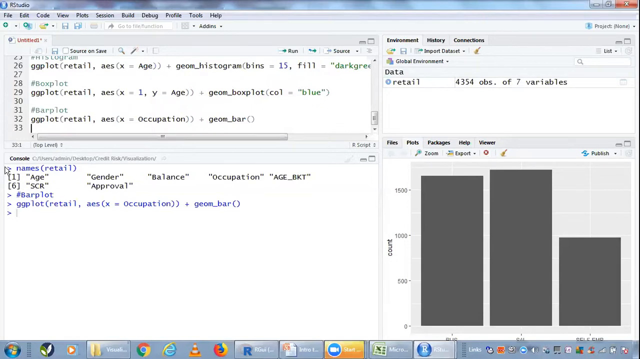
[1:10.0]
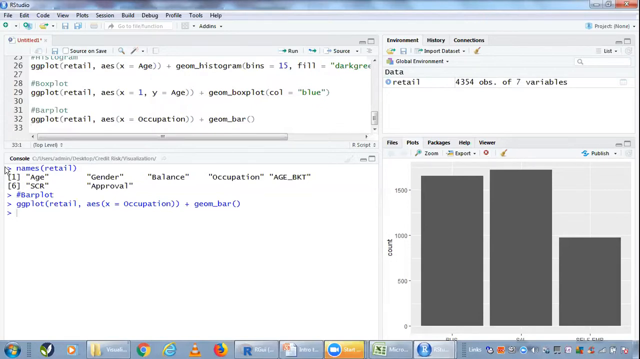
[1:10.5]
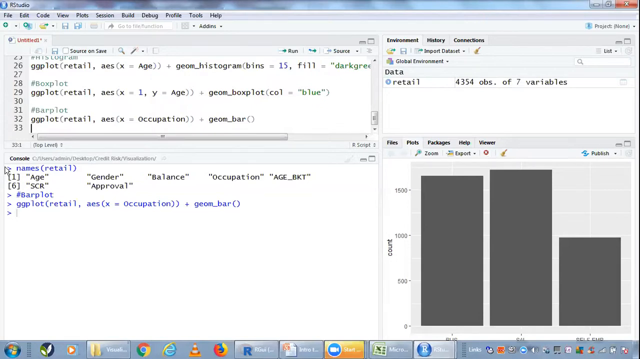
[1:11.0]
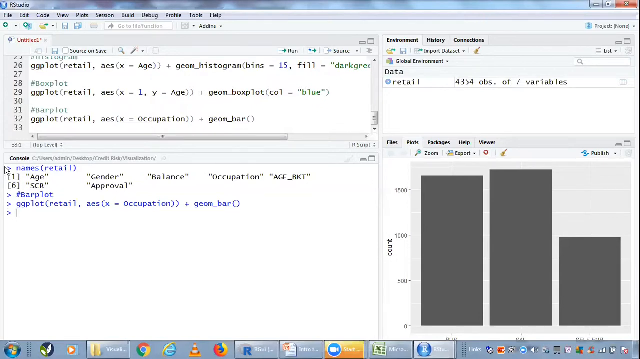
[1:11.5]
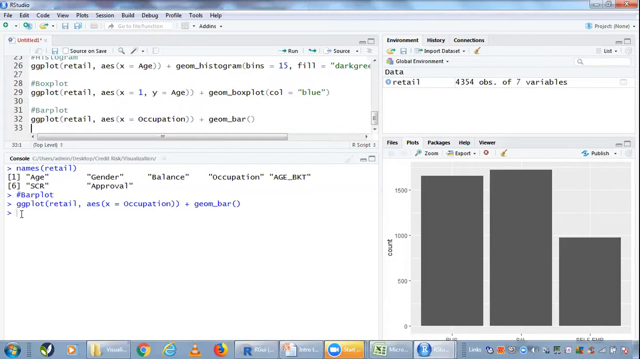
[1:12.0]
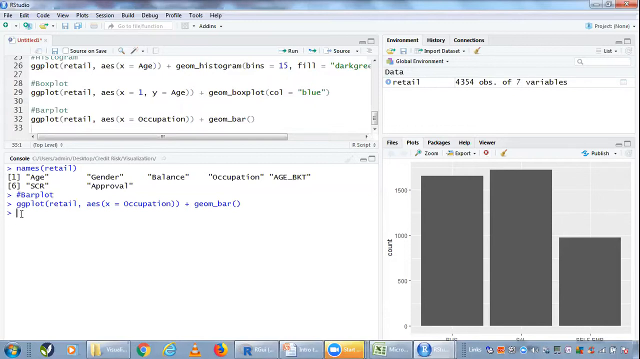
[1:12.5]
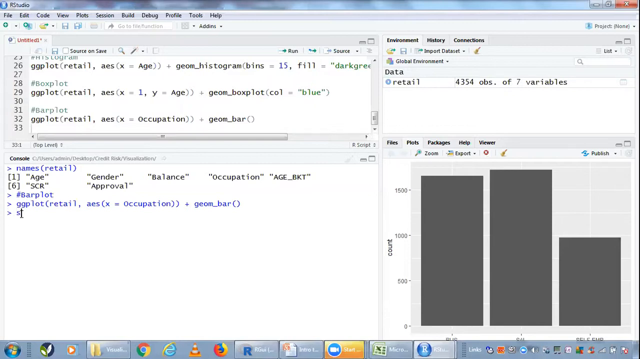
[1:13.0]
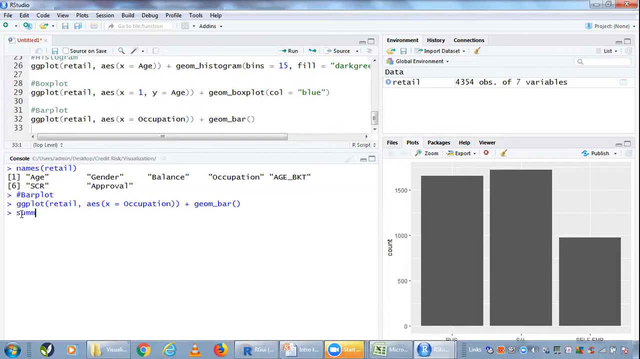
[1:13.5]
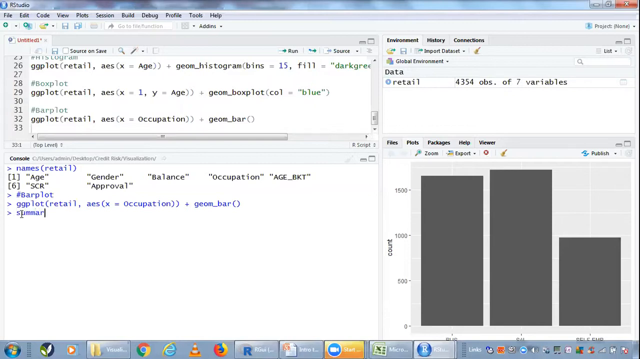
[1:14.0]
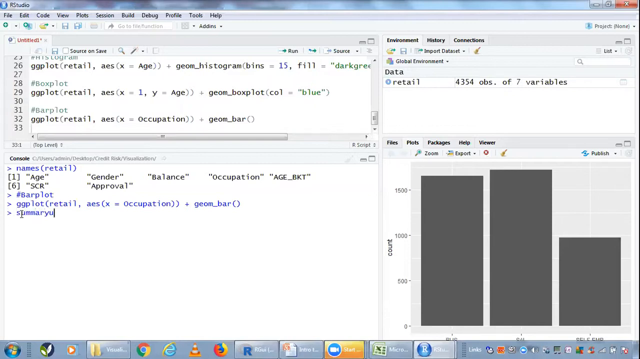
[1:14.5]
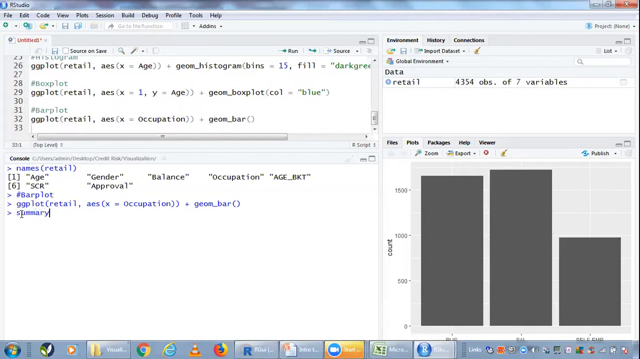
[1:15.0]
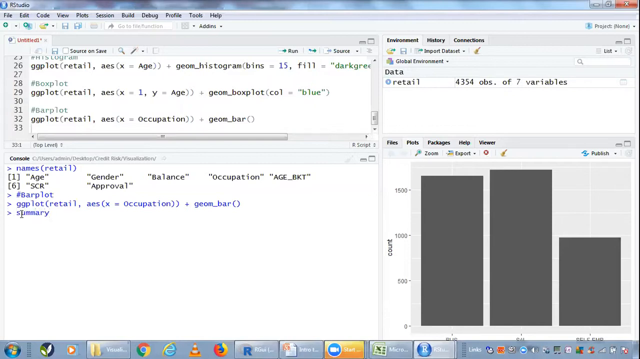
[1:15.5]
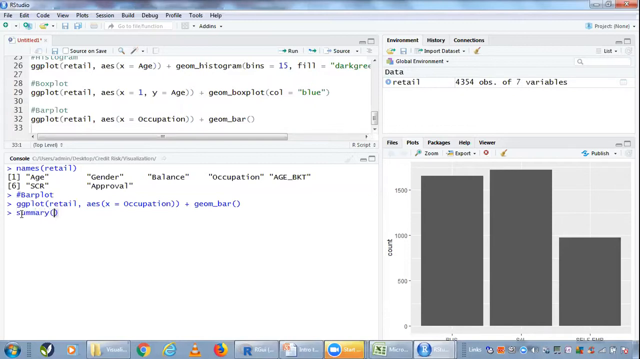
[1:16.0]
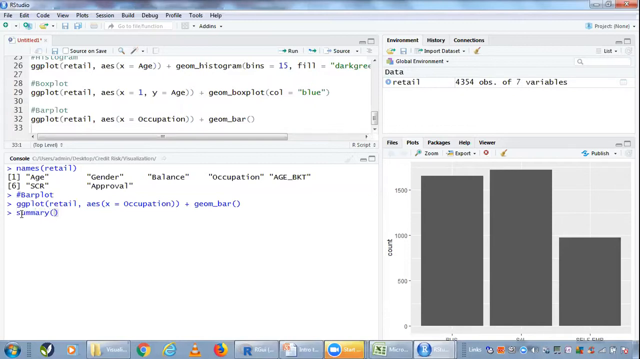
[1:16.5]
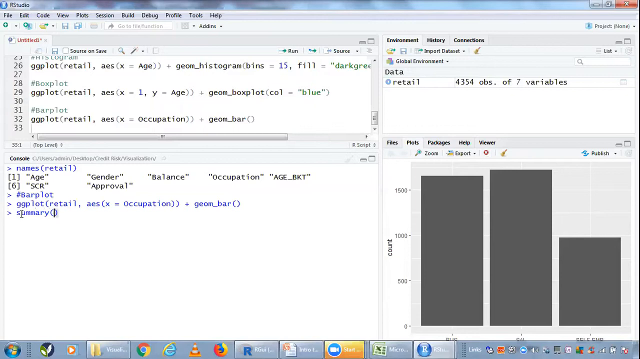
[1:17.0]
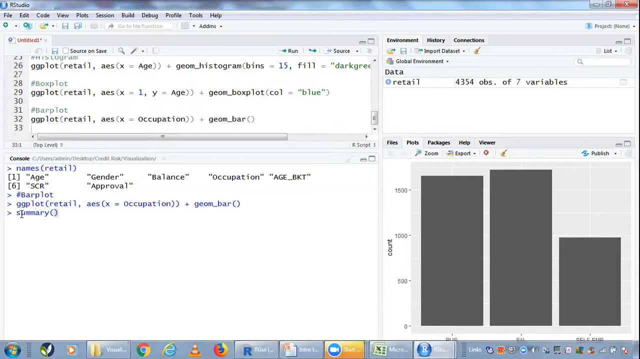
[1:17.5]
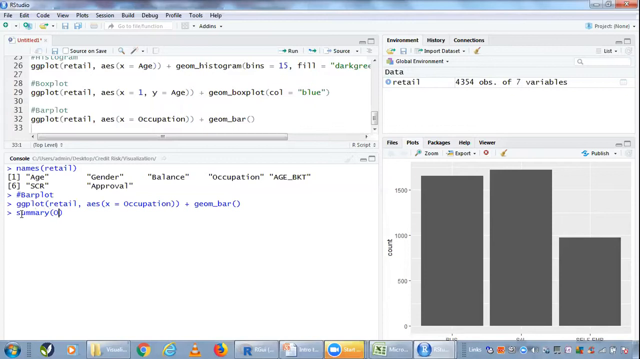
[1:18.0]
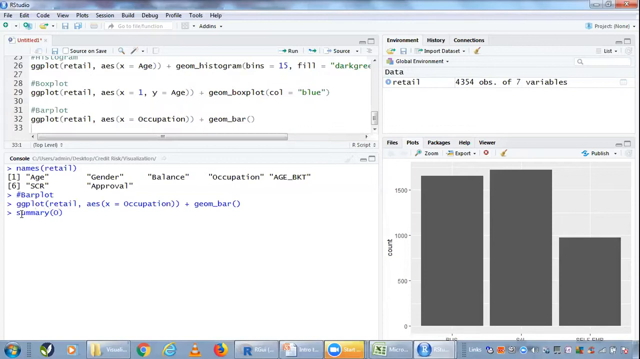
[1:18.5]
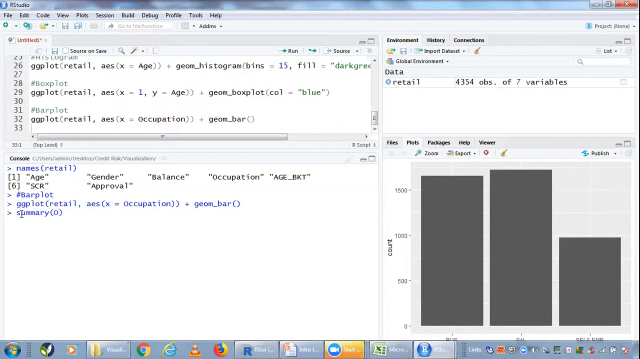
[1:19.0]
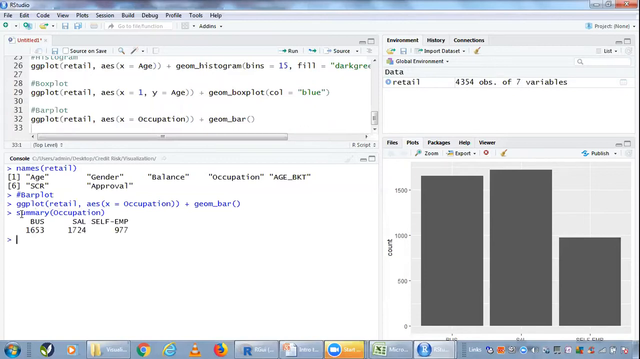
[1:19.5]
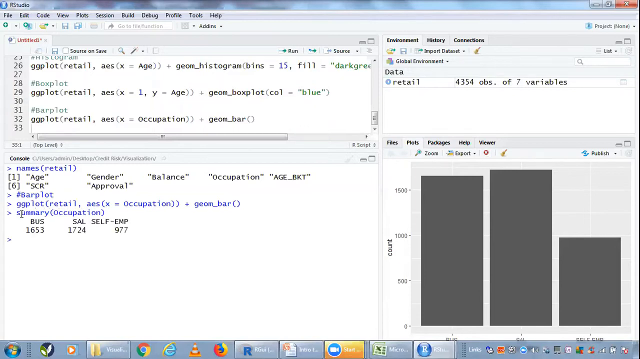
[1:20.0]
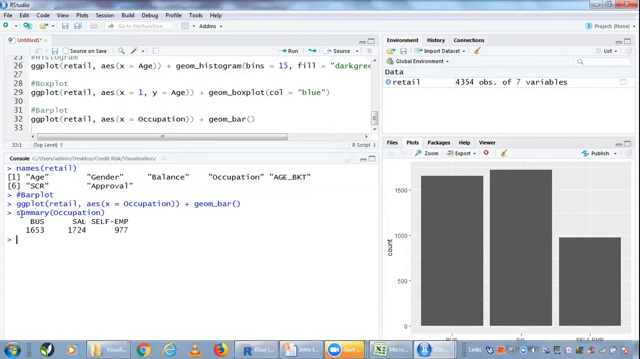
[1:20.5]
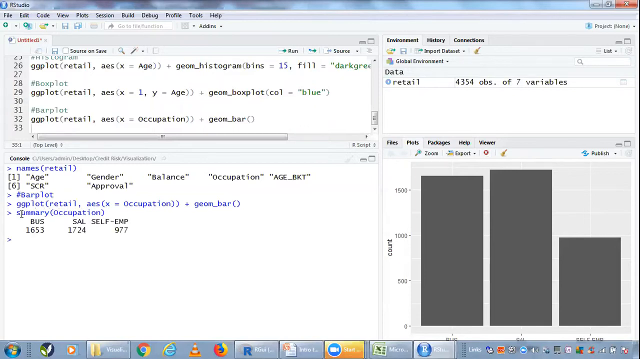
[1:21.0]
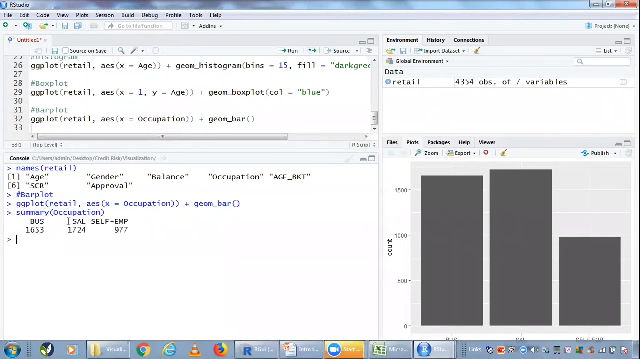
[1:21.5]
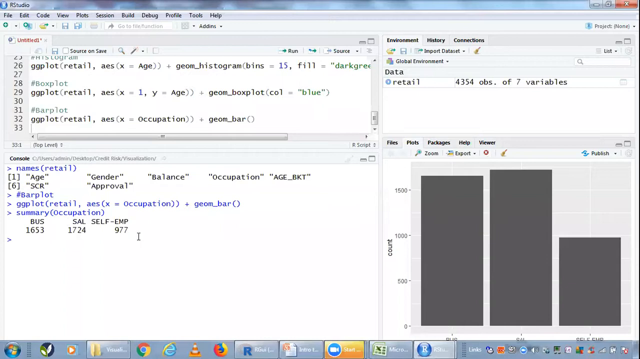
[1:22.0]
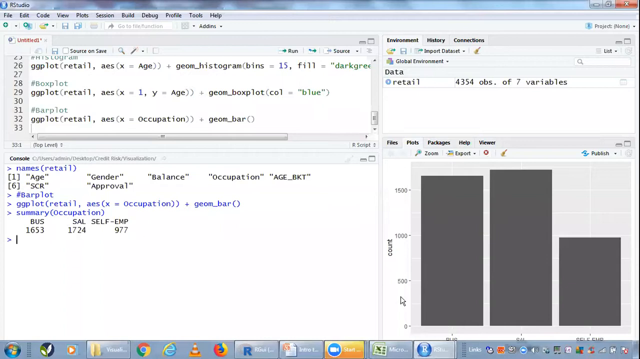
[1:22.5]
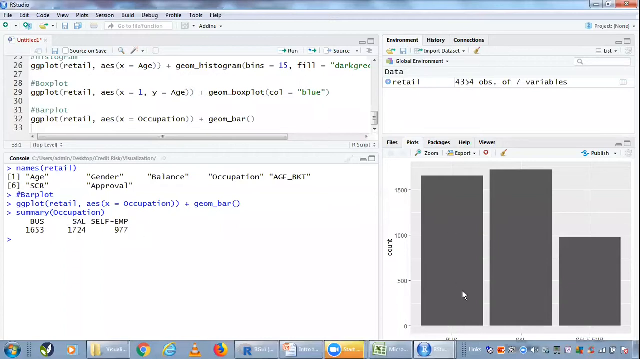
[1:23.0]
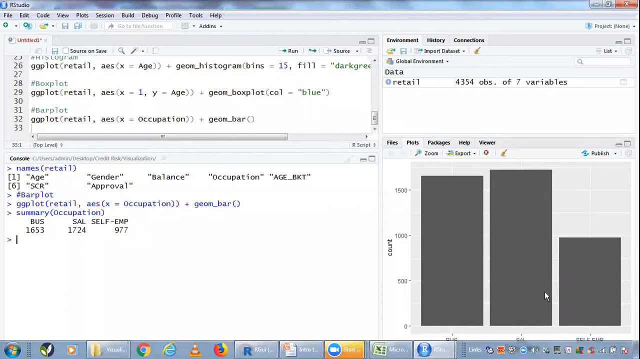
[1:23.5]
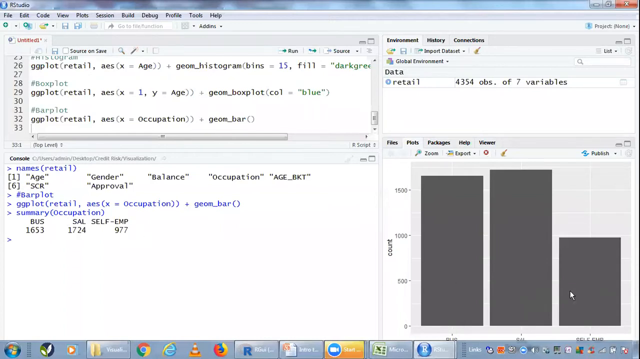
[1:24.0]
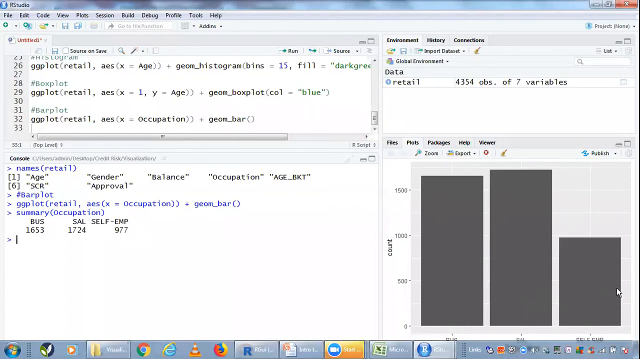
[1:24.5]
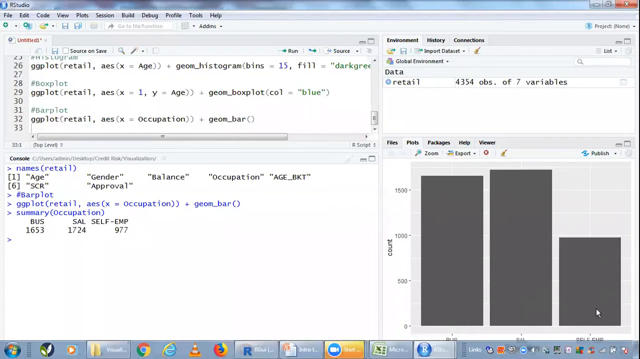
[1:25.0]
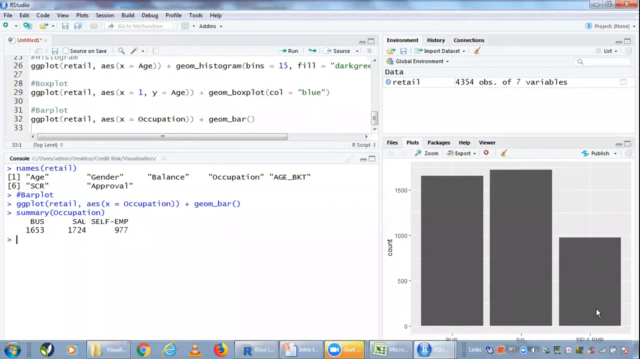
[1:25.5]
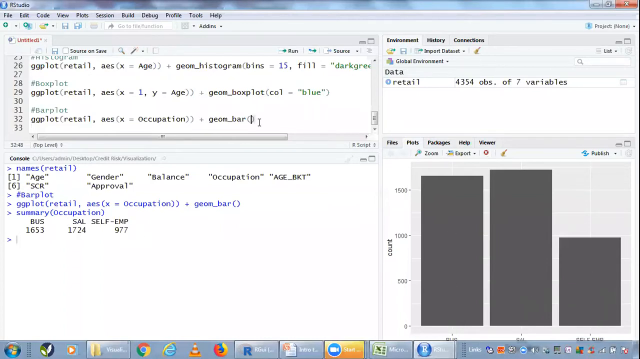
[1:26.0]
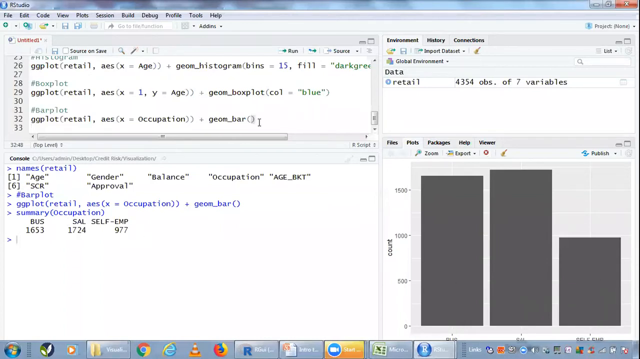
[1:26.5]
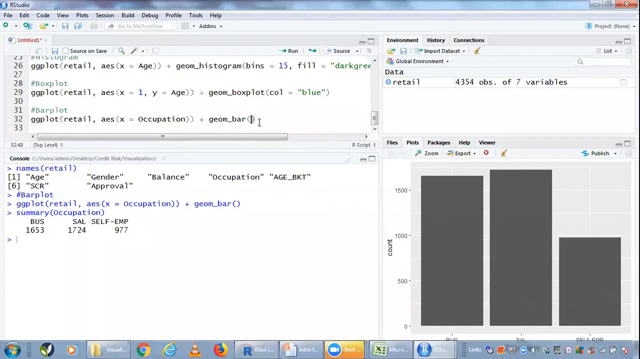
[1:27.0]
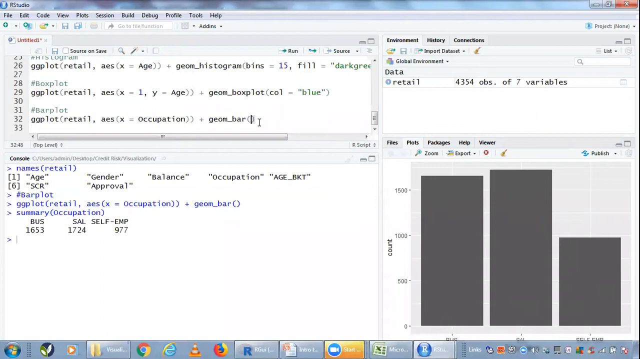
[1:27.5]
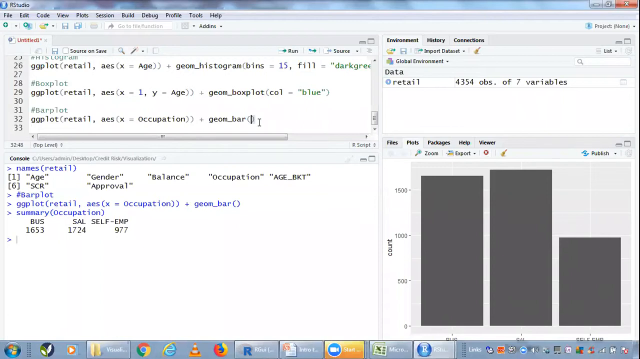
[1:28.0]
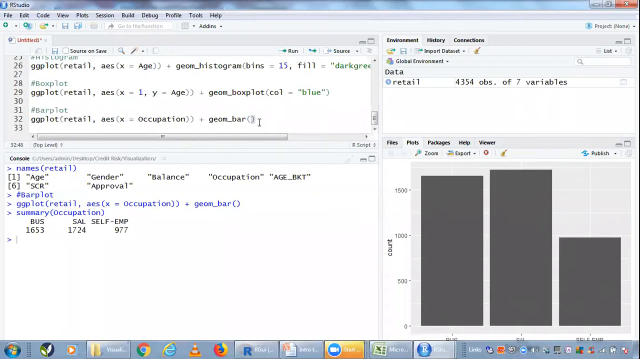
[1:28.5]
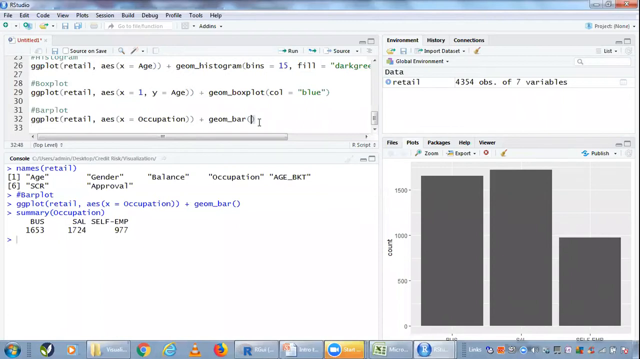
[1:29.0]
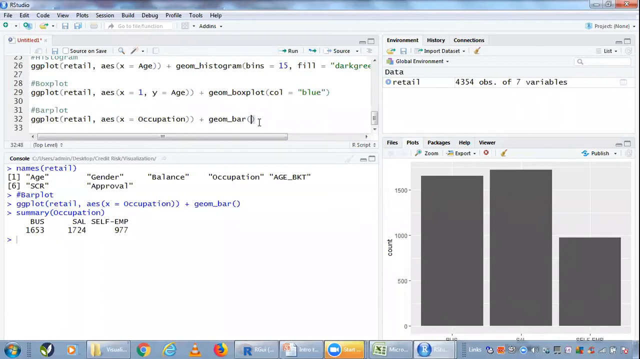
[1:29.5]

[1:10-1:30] The user types "summary(occupation)" in the console panel in the bottom left corner and hits enter. The output shows "BUS" with 1,653 underneath, then "SAL" with 1,724 underneath, then "SELF-EMP" with 977 underneath. These figures seem to correspond to the bar chart in the bottom right plots panel, and the cursor moves over to the plots panel and hovers over the chart. The chart shows three gray bars: the first looks to be at about 1653, the second looks to be at 1724, and the last, the lowest, has a count of 977.